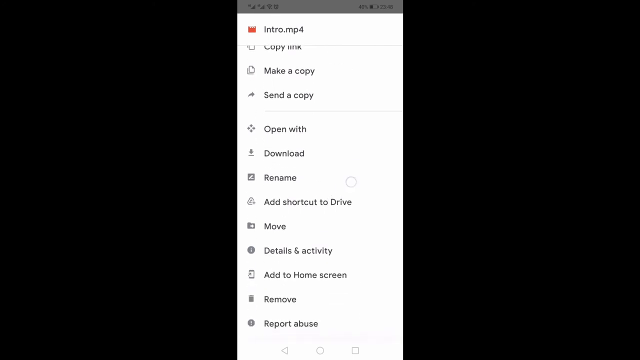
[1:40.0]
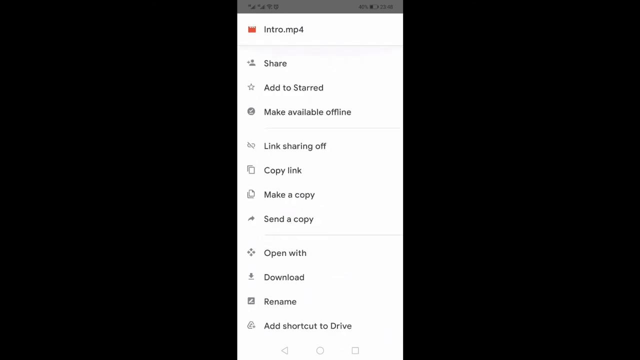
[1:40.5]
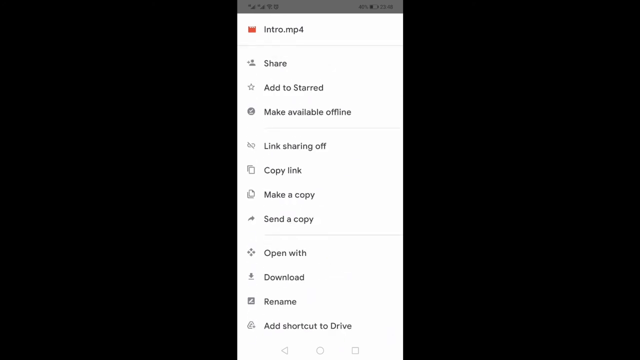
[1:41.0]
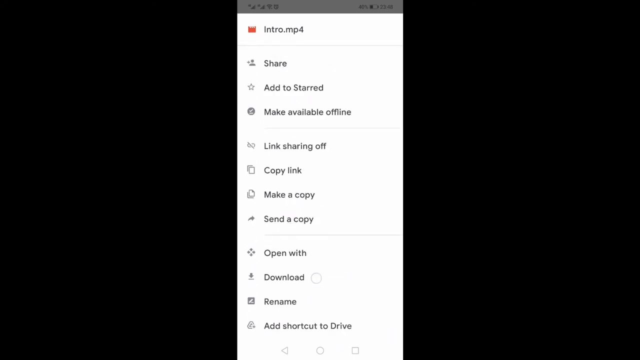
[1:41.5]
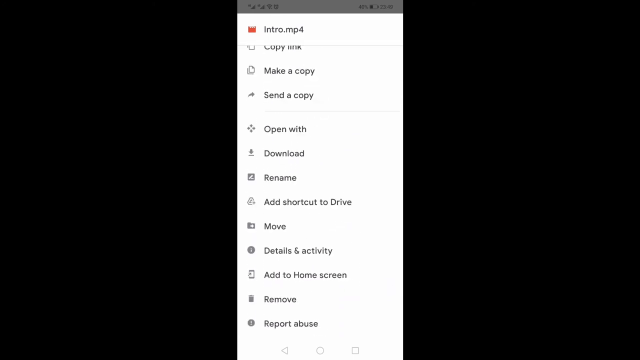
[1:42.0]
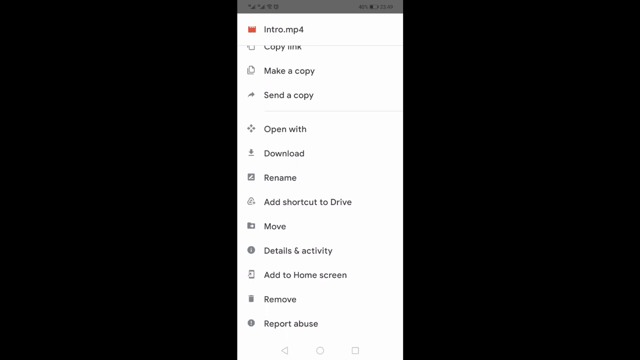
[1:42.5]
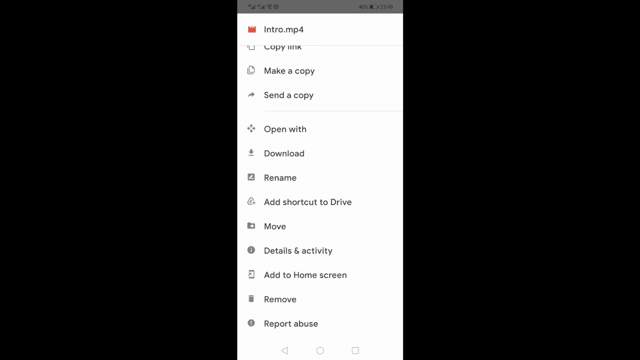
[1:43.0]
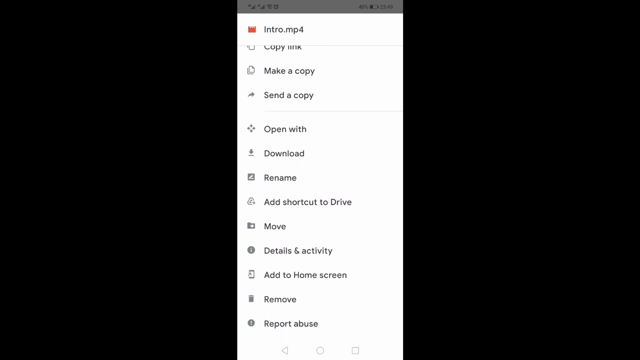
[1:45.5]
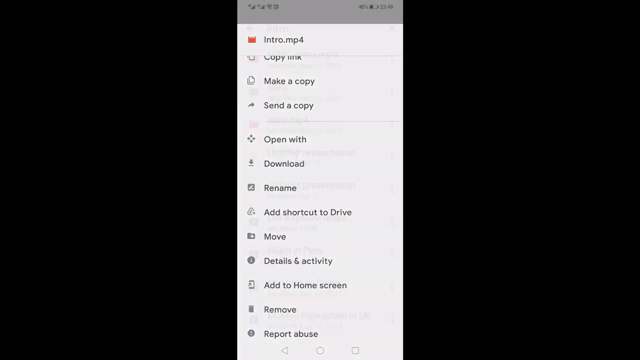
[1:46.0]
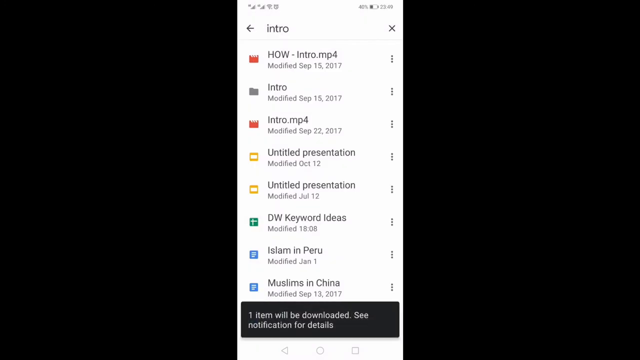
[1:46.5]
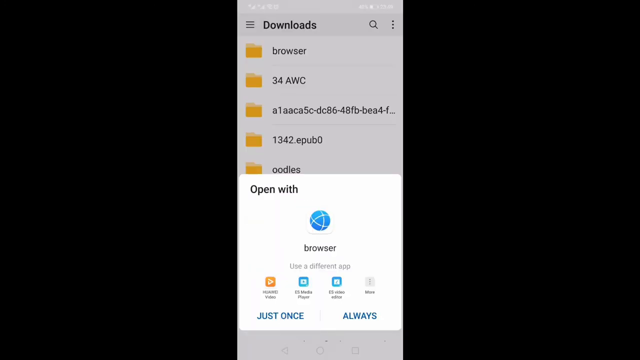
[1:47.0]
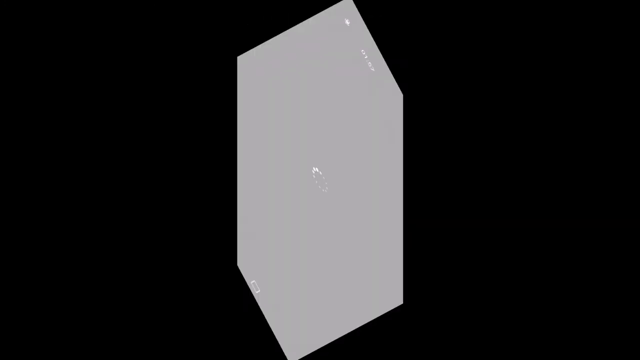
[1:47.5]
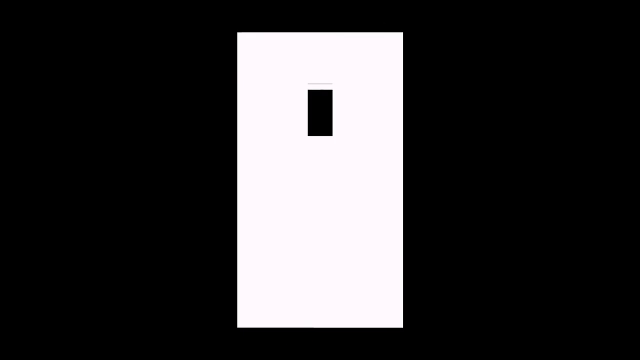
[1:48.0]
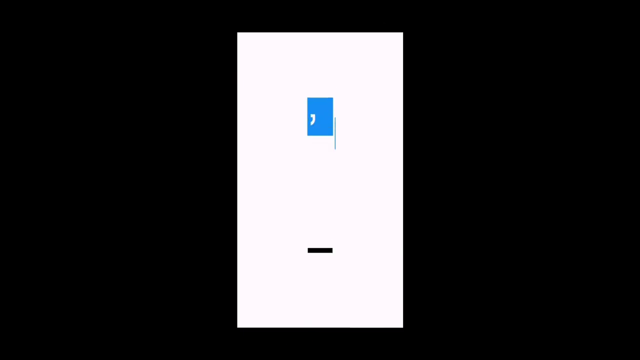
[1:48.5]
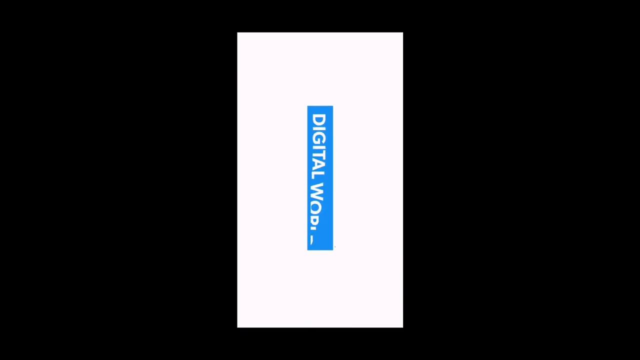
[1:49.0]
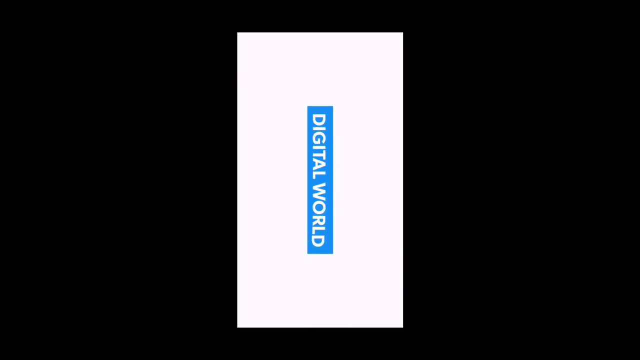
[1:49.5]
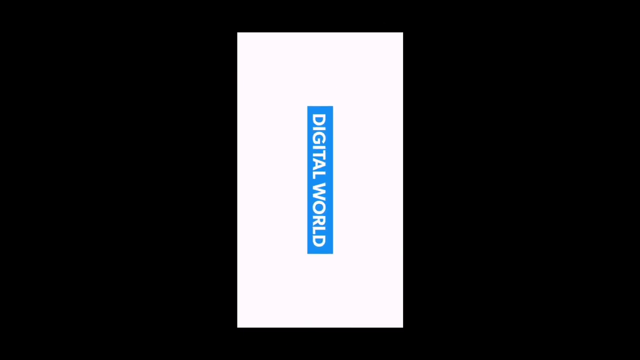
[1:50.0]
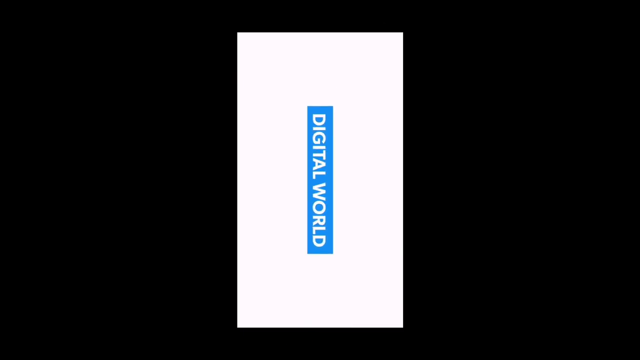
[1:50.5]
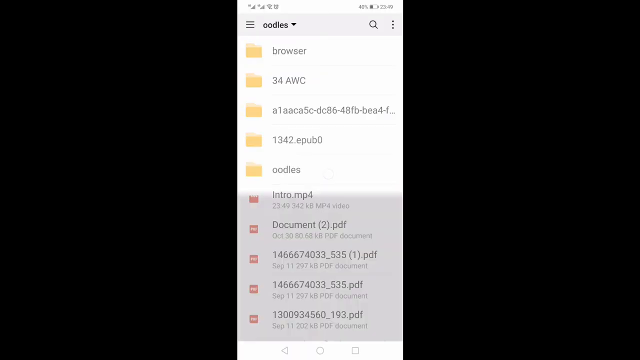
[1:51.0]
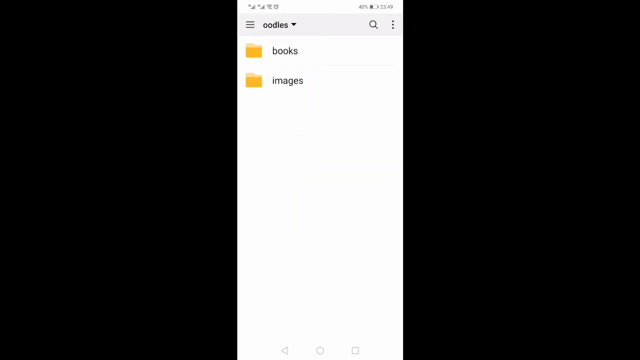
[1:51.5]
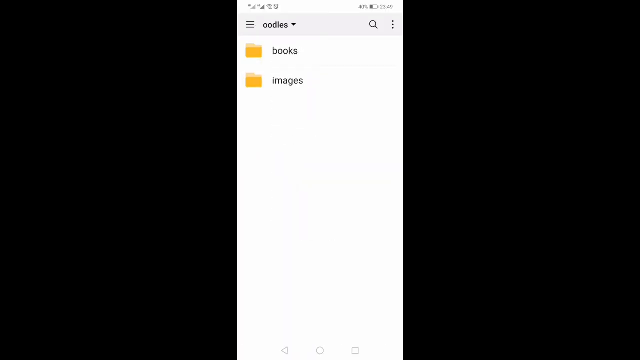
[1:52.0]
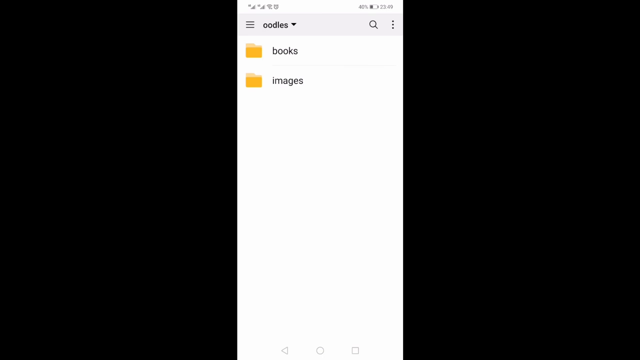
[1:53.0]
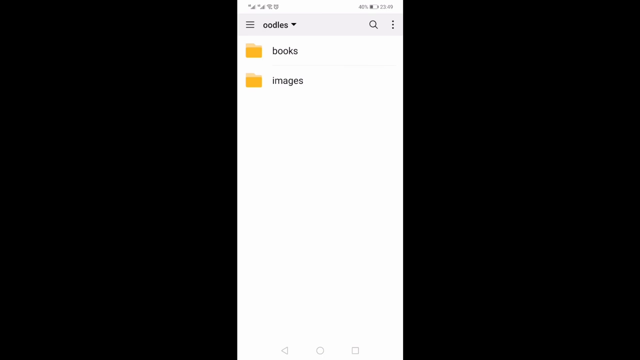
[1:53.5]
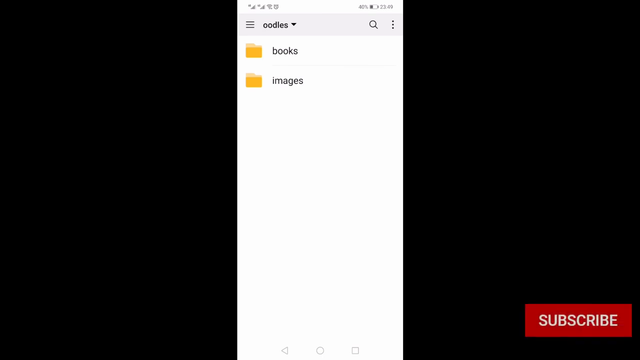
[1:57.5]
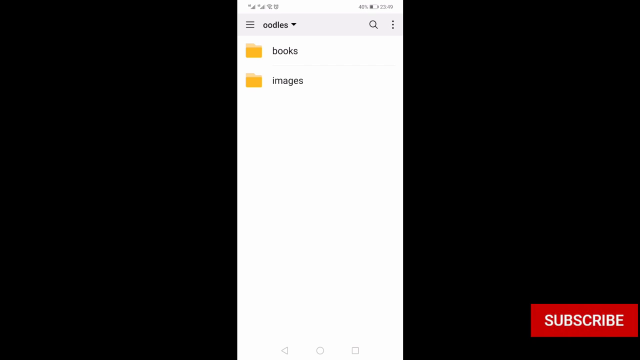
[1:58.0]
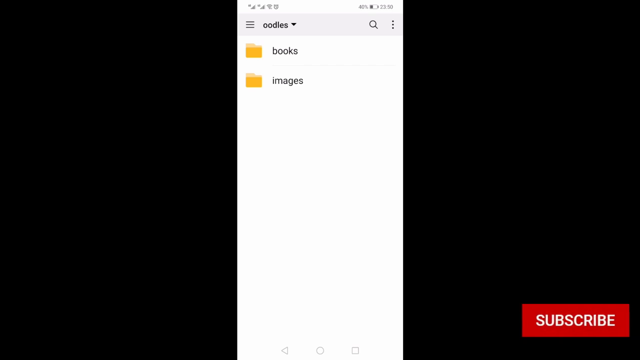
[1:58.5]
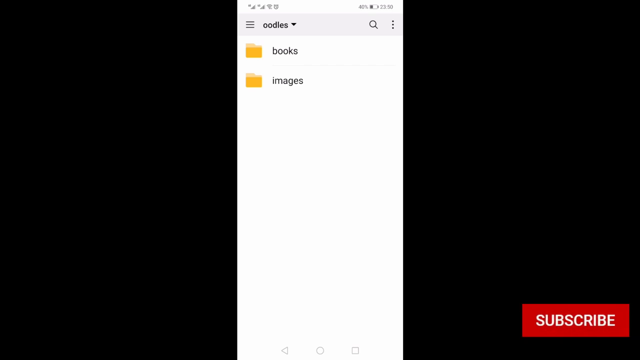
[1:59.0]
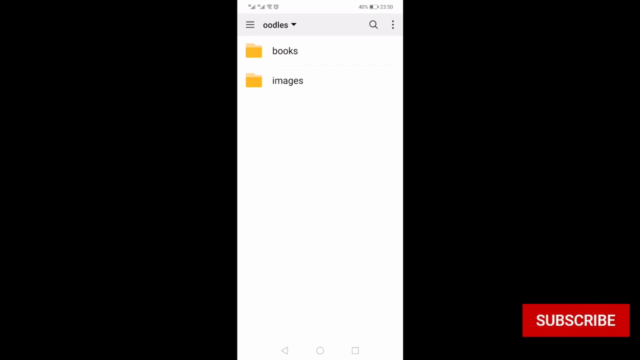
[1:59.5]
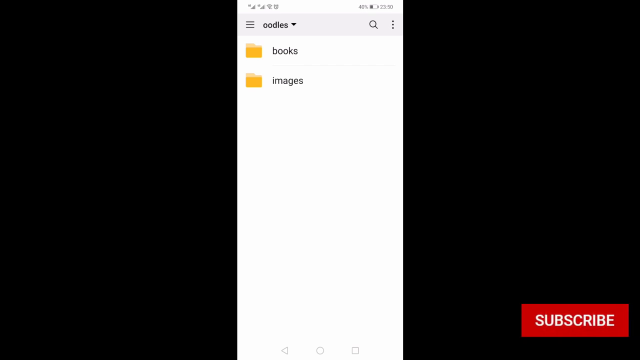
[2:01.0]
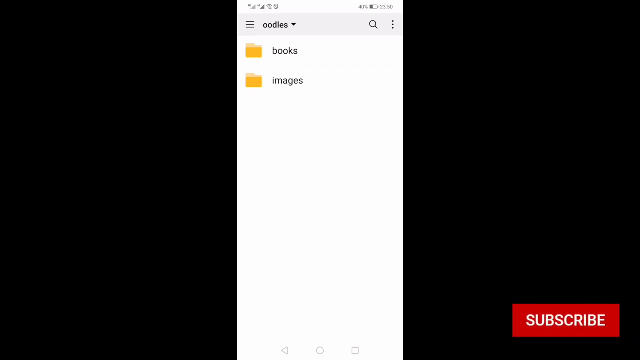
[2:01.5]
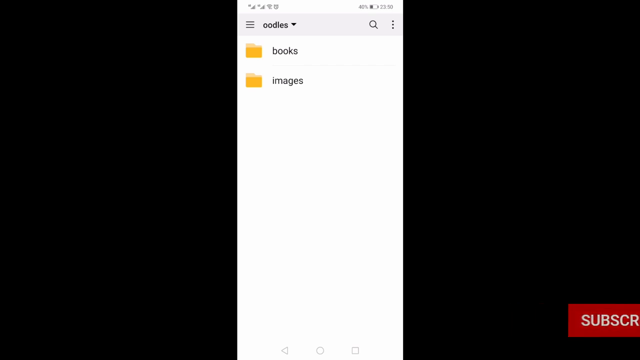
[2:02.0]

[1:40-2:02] The file called intro is being saved, and a website called "how to how to how to" has also been looked up. A window or drop-down menu shows options such as make a copy and send a copy. Something is clicked very quickly and something like a download happens. A blue and white vertical "digital world" item, like an advertisement, pops down. Next, something labeled "oodles" is opened, with a drop-down menu and two files, one for books and one for images. A subscribe button pops up in the lower right corner. The screen is mostly black, almost entirely, except for one white part of Google Drive that looks like the drop-down menu: a vertical rectangle listing options such as open, download, and rename.